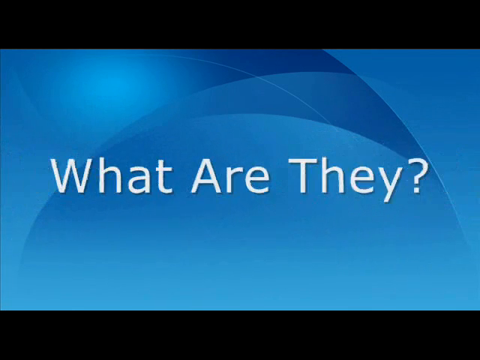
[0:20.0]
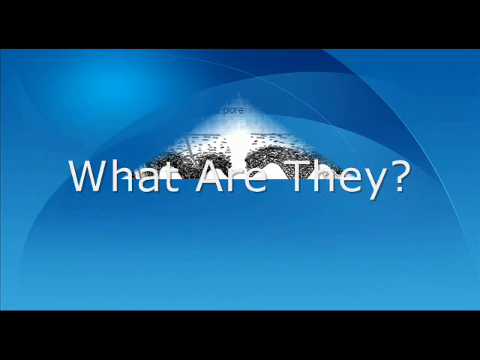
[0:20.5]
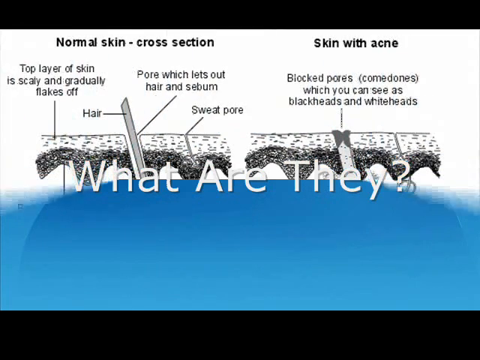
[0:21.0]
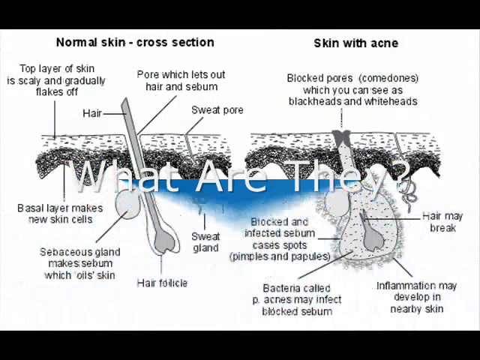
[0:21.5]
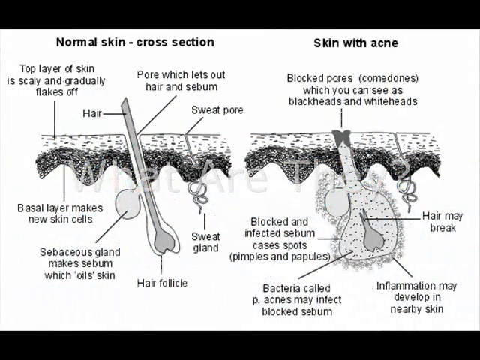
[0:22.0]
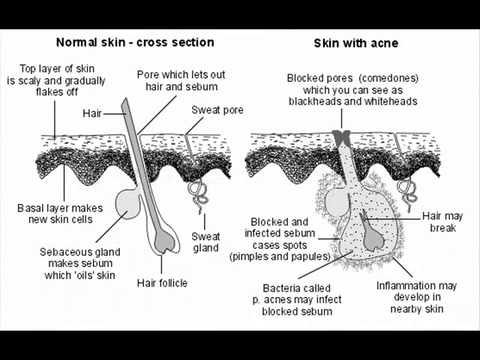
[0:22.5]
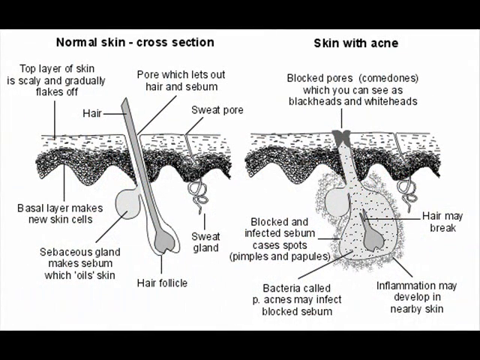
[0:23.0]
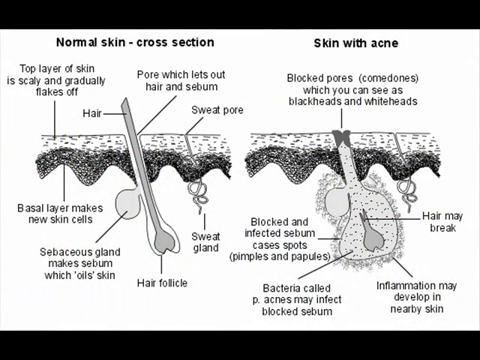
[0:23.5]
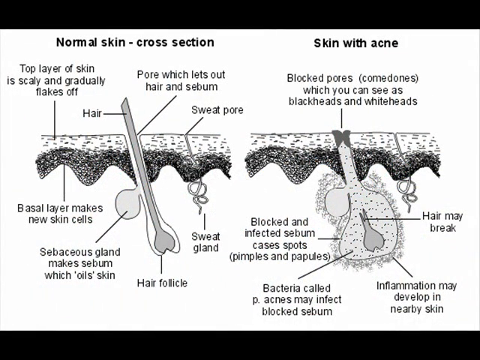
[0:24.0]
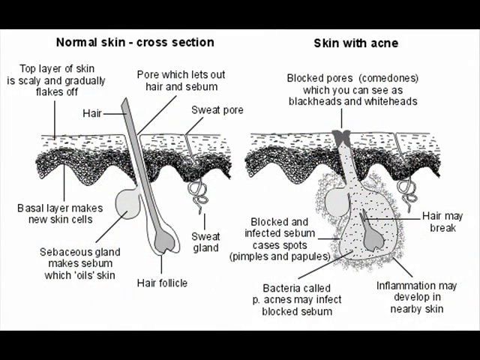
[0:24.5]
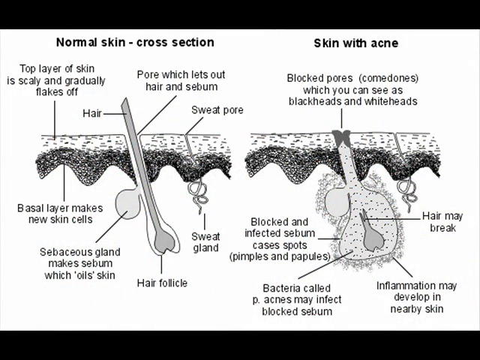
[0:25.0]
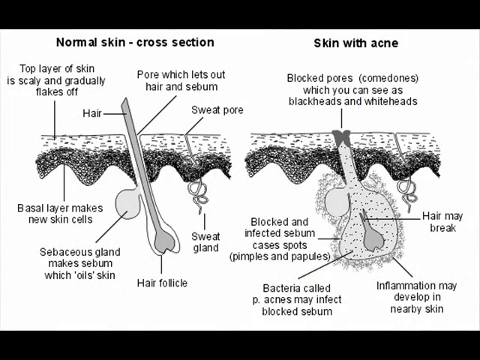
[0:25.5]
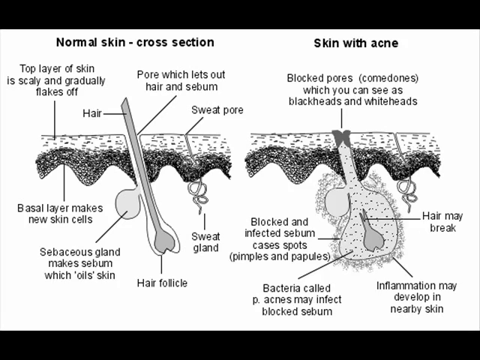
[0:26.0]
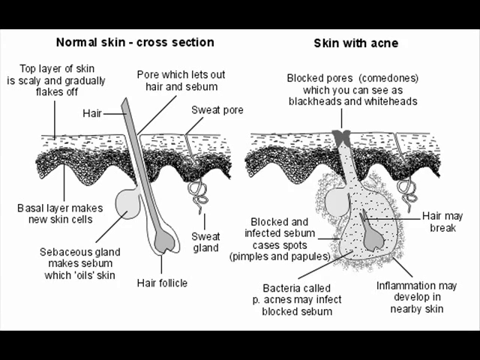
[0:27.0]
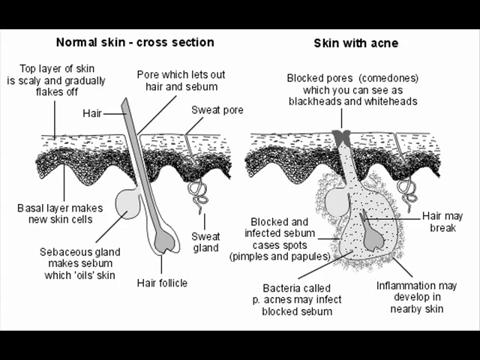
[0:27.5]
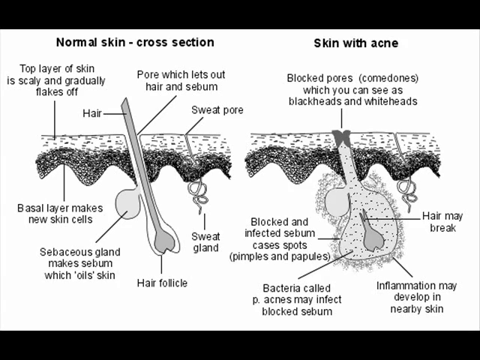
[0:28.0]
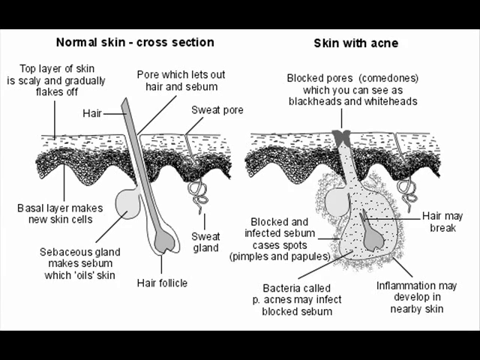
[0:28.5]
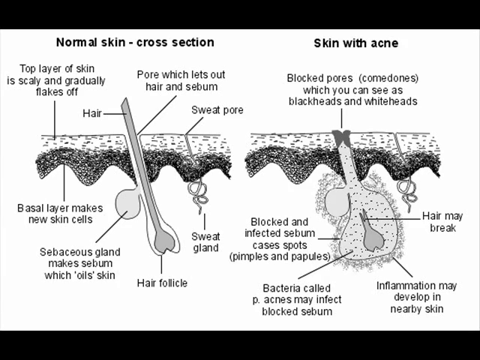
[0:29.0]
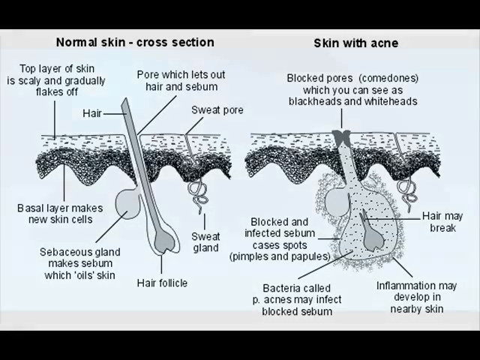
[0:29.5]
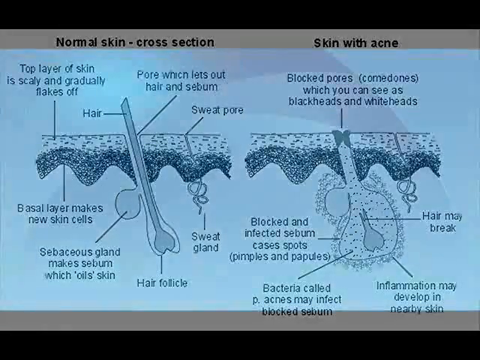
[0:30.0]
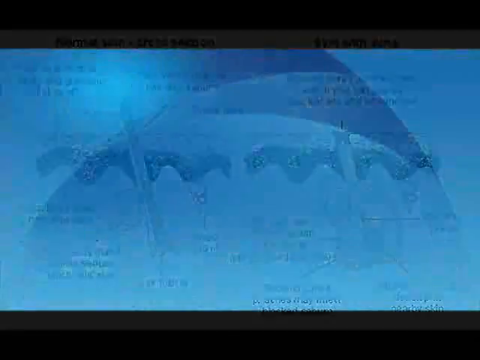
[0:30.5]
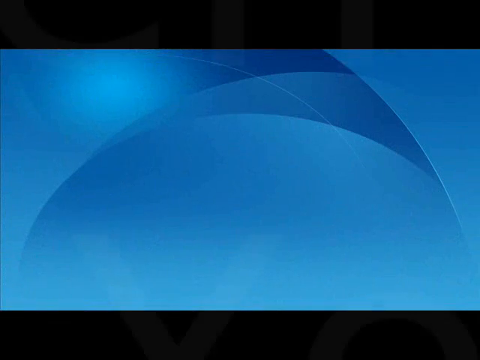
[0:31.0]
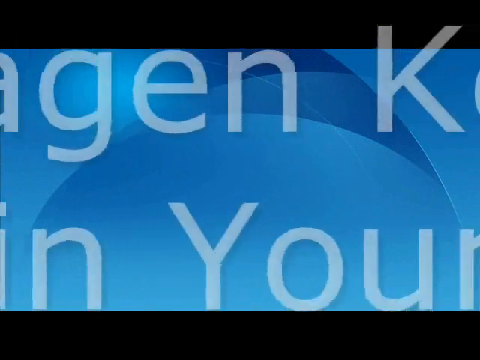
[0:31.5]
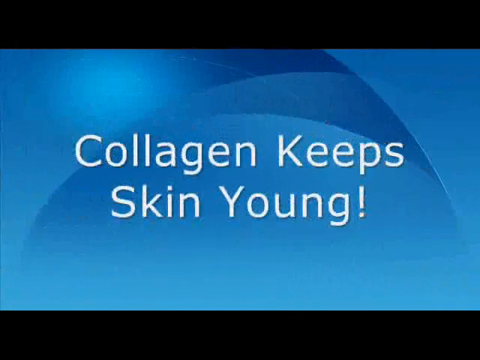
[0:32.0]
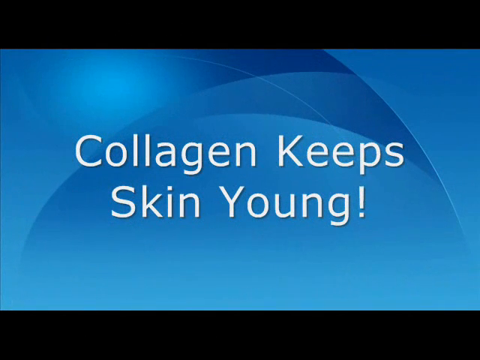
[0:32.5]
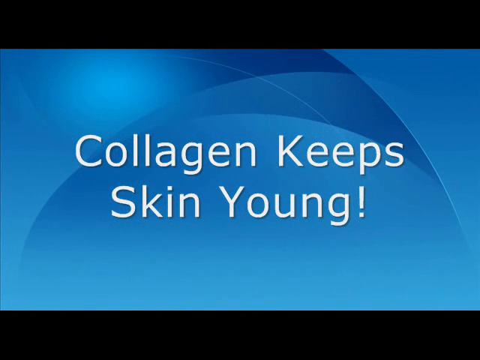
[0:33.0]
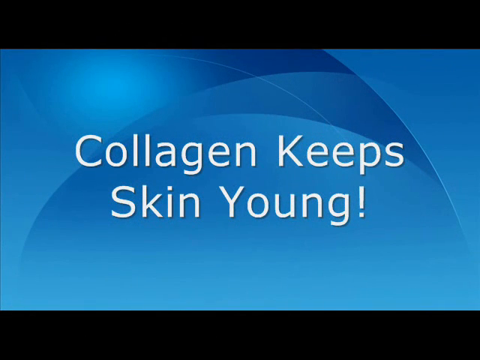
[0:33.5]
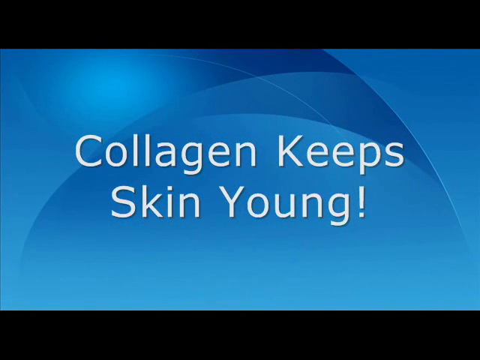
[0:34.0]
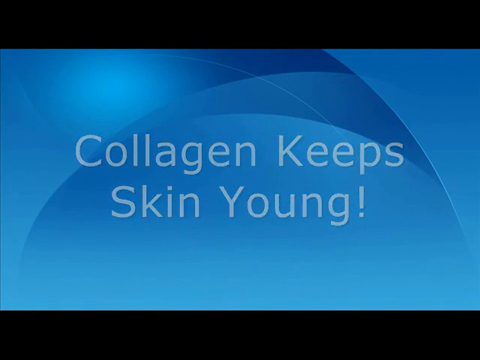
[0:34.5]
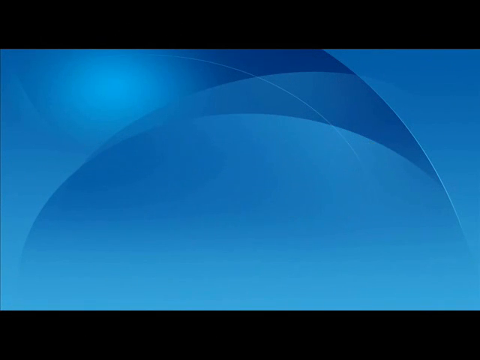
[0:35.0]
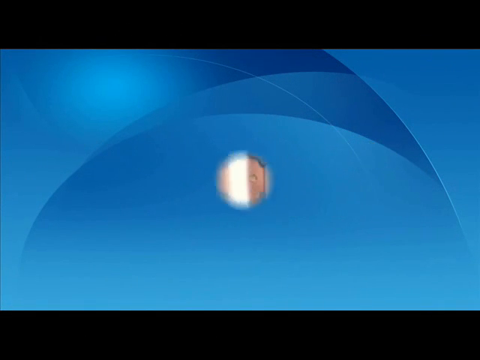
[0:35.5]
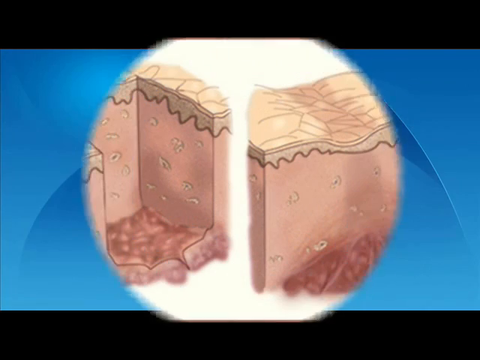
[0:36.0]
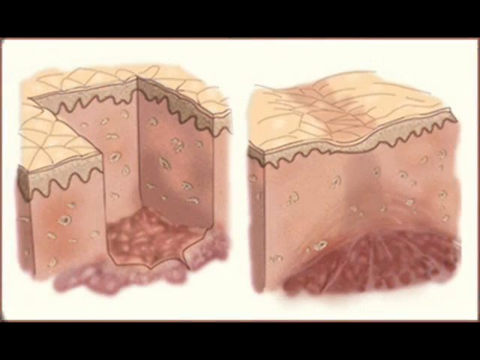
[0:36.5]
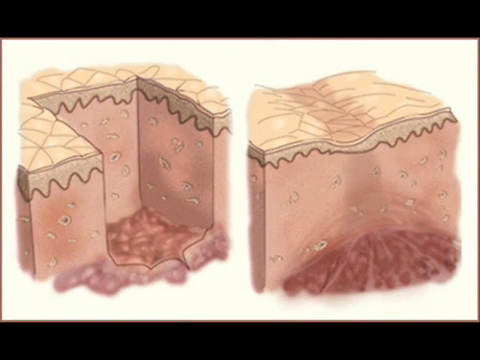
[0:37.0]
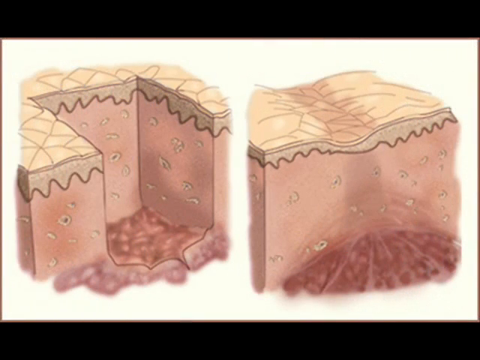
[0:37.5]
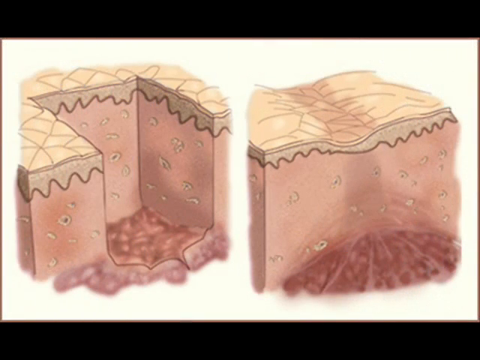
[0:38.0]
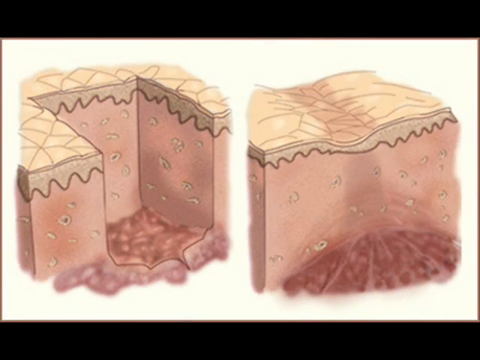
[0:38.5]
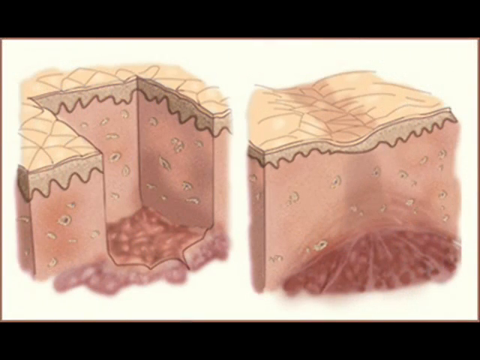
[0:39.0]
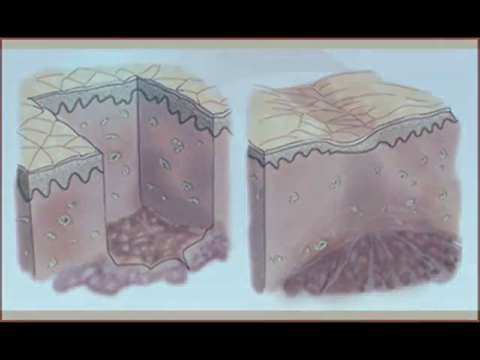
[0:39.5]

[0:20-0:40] A blue title card shows white text reading "What are they?" A circle transition then reveals a graphic with a white background and multiple lines of black text, split into two images. The left image is labeled "normal skin cross section," with labels reading "Top layer of skin is scaly and gradually flakes off," "Hair," "Pore which lets the hair and sebum out," "Sweat pore," "Basal layer makes new skin cells," "Sebaceous gland makes sebum which oils skin," and "Hair follicle and sweat gland." It shows a narrow hair follicle and a hair protruding from a side view of the skin. The right image reads "skin with acne," with labels reading "Blocked pores," "Comedones which you can see as blackheads and whiteheads," "Blocked and infected sebum causes spots," "Pimples," "Bacteria called P. Acnes may infect blocked sebum," "Inflammation may develop in nearby skin," and "Hair may break." This image shows the hair follicle with the root of the hair broken and the area around the hair swollen compared to the first graphic. The screen then transitions to a blue background with white text reading "Collagen keeps skin young."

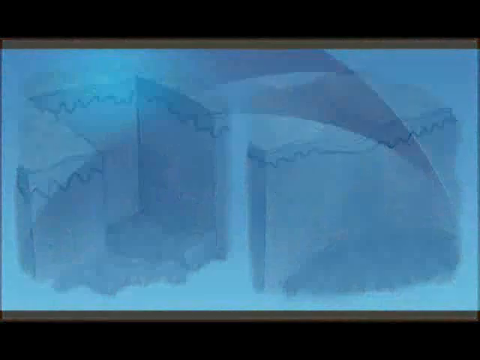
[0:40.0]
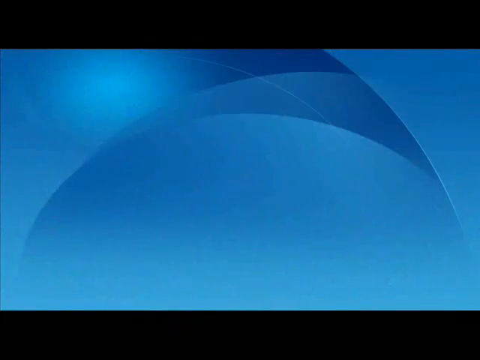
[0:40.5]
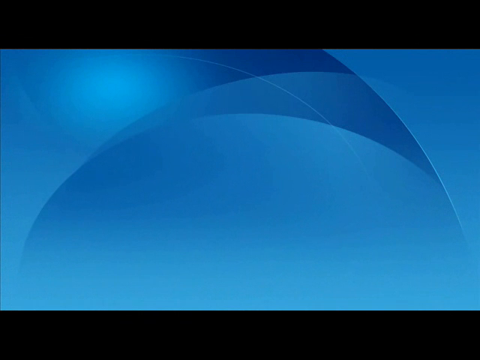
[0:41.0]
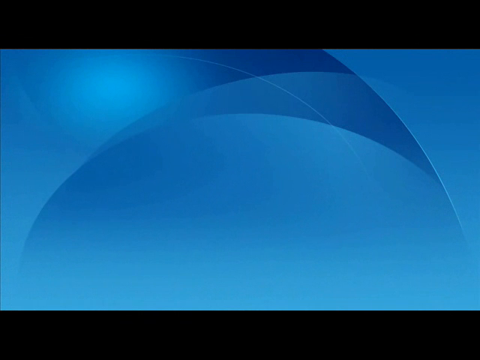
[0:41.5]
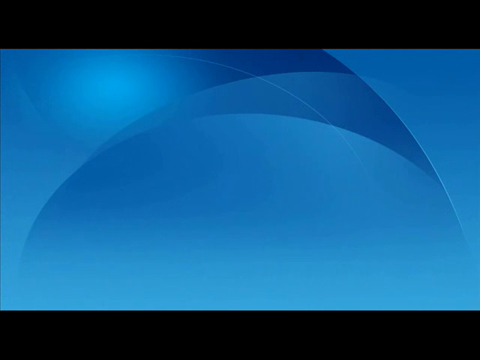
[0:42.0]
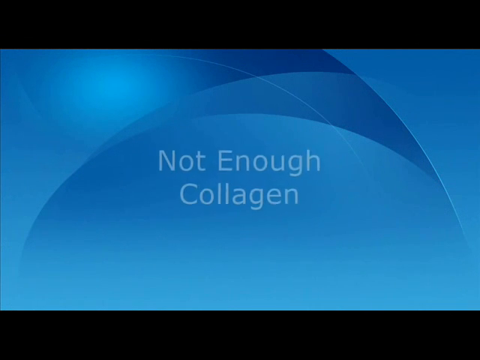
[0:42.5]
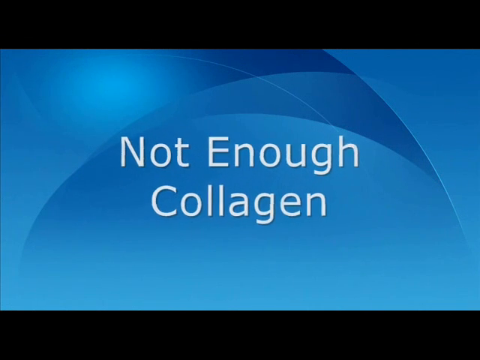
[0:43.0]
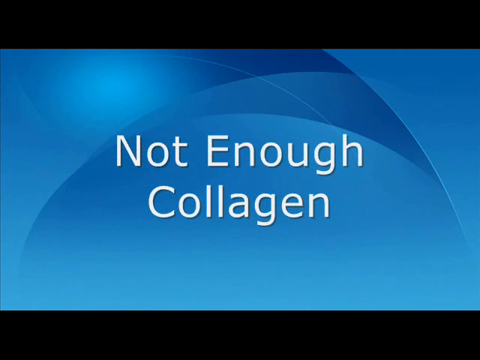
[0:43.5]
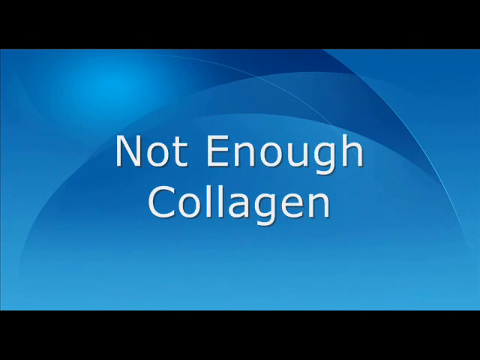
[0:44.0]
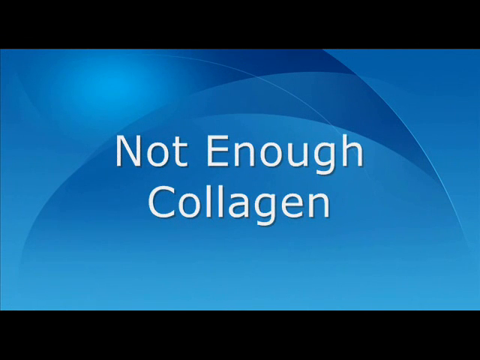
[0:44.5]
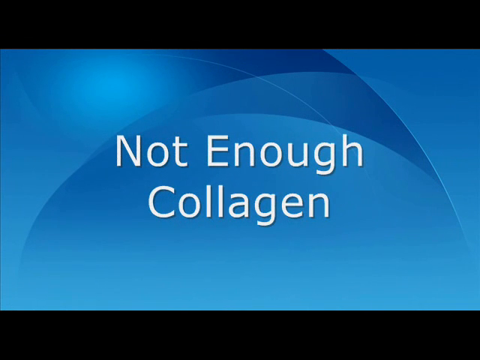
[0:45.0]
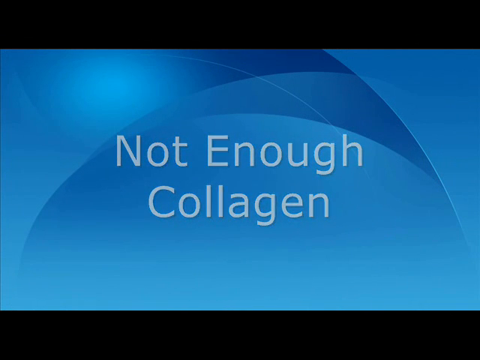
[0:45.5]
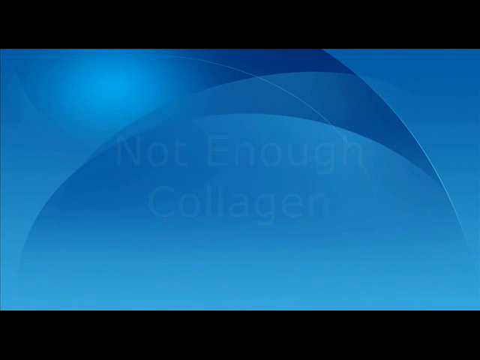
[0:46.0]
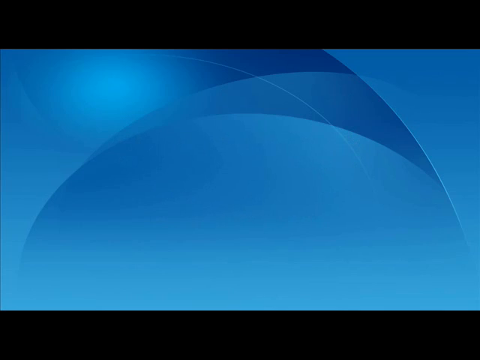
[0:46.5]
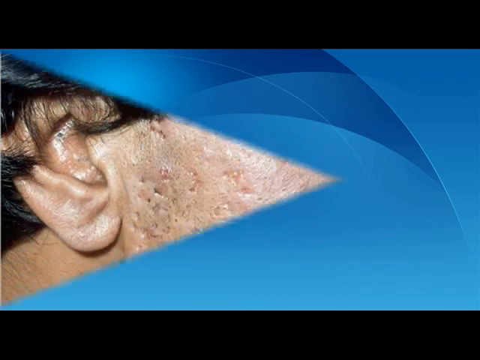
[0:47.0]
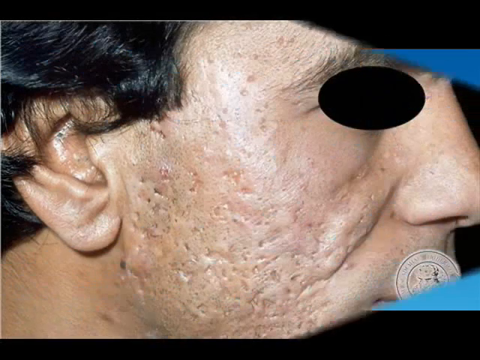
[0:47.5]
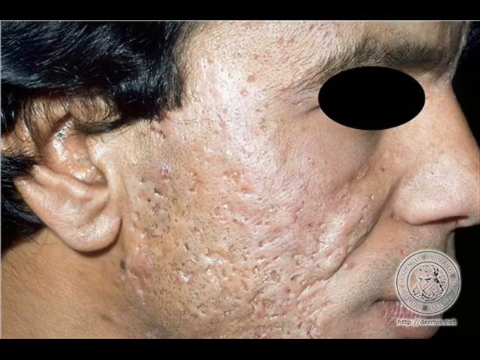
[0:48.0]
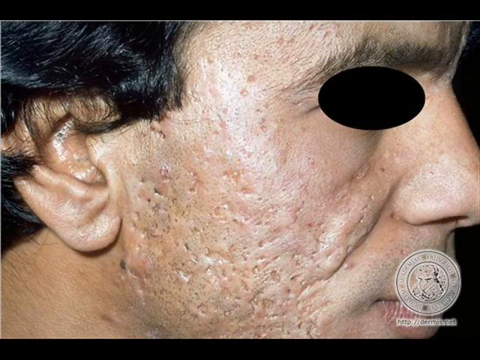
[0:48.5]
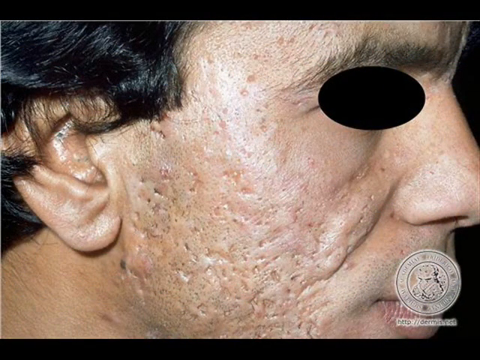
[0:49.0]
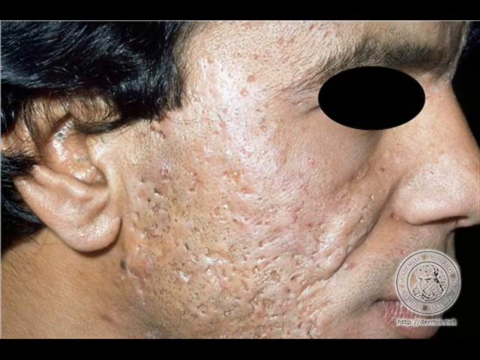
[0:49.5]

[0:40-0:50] A solid blue background transitions to a similar solid blue background, and text appears reading "not enough collagen." A sideswipe transition then shows a photo of a man's face. He is looking toward the right, and his eye is covered with a black oval for anonymity. The shot is heavily zoomed on the right side of his face, showing skin covered with multiple pock marks and acne, as well as scarring. He has black hair. There is a blurred-out watermark in the bottom right corner.